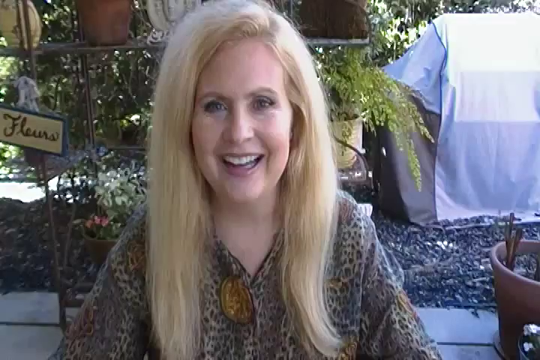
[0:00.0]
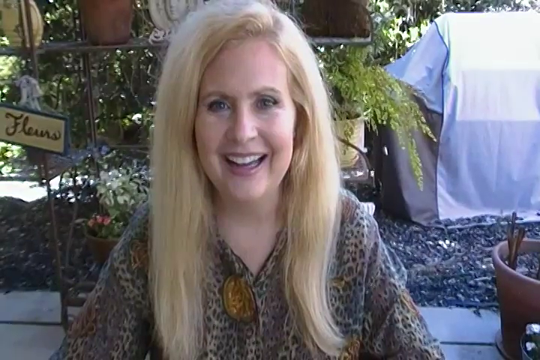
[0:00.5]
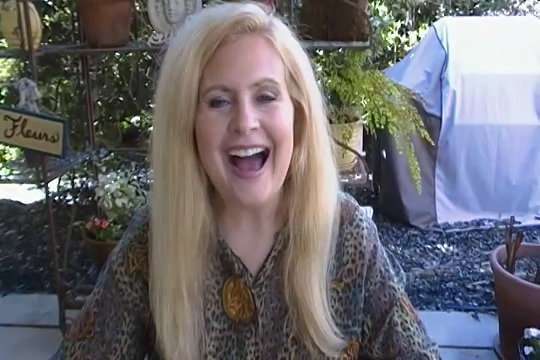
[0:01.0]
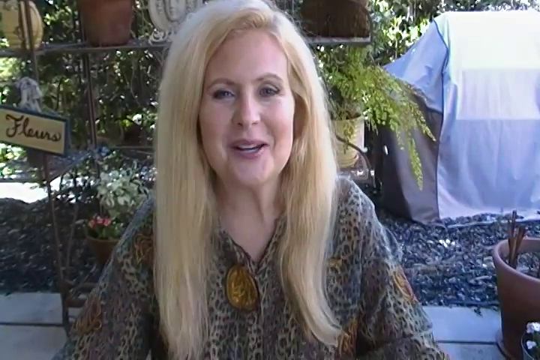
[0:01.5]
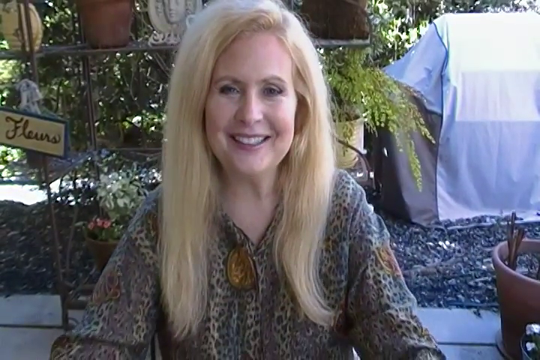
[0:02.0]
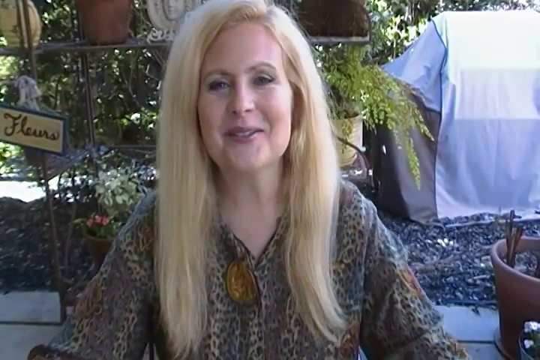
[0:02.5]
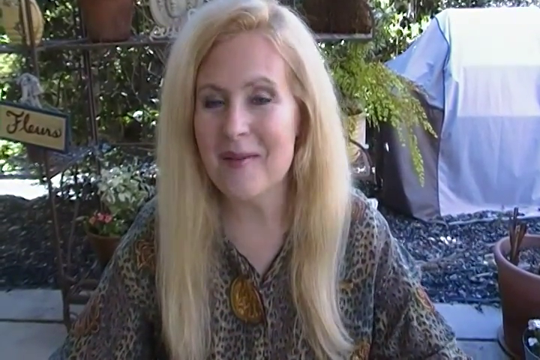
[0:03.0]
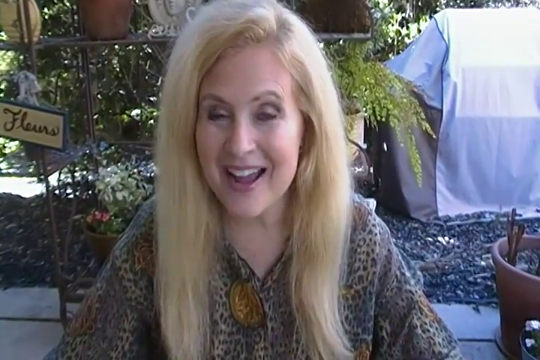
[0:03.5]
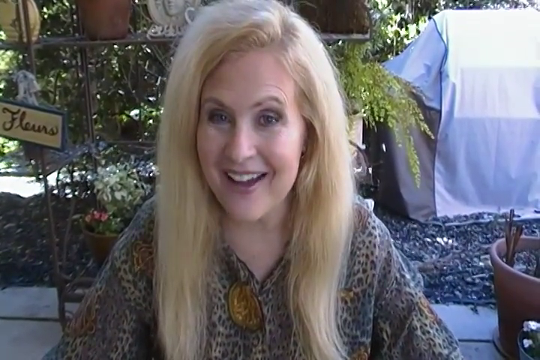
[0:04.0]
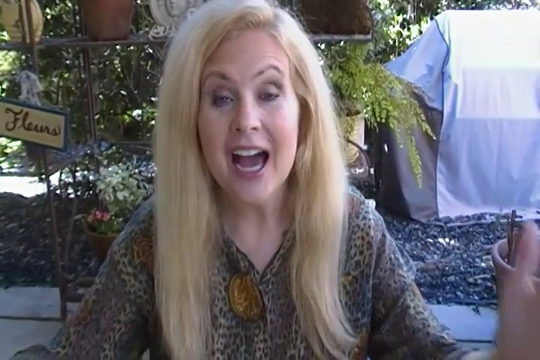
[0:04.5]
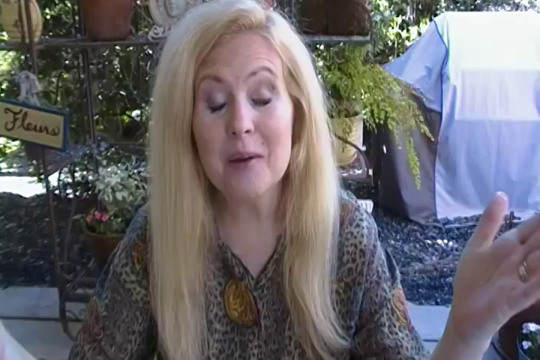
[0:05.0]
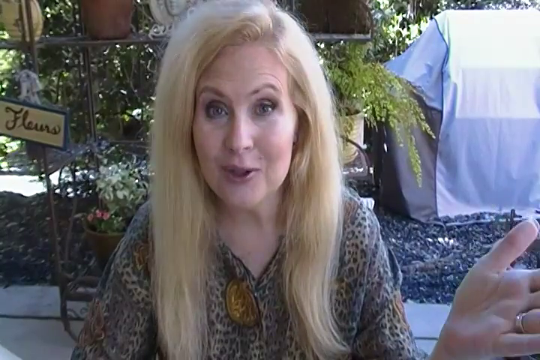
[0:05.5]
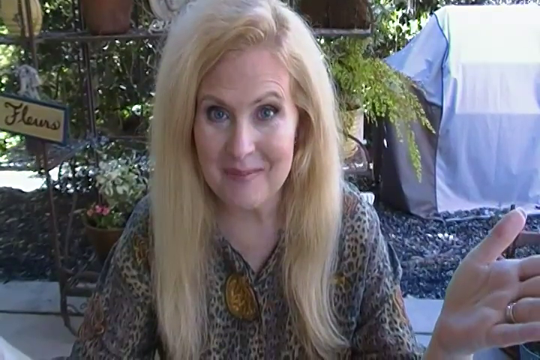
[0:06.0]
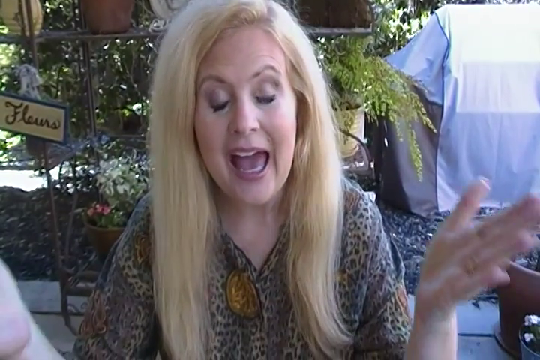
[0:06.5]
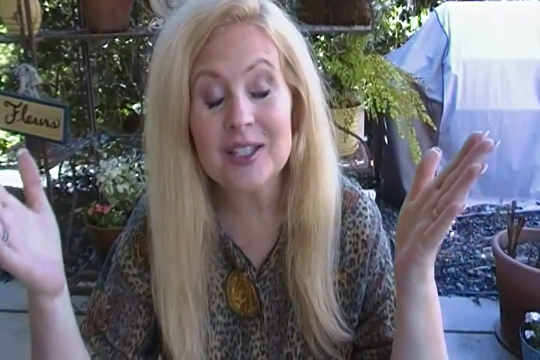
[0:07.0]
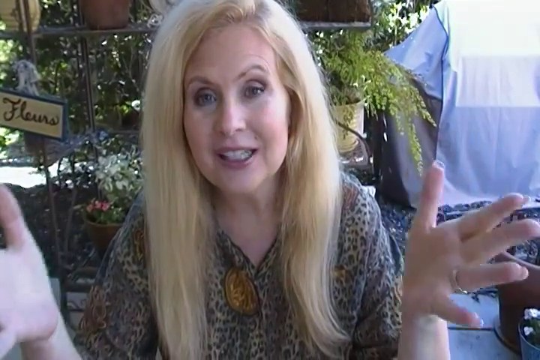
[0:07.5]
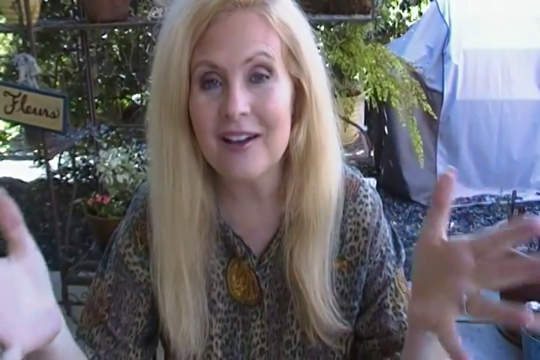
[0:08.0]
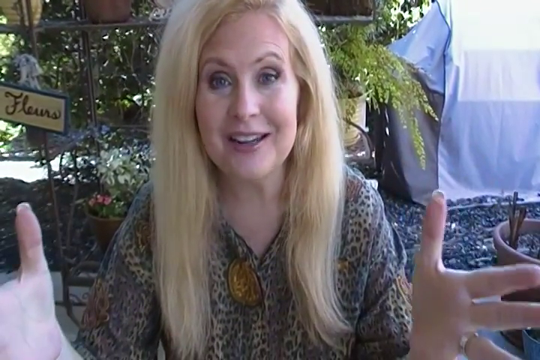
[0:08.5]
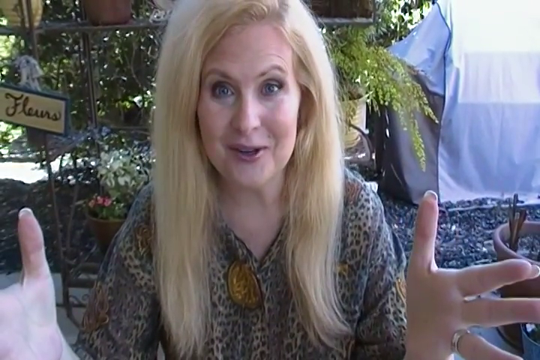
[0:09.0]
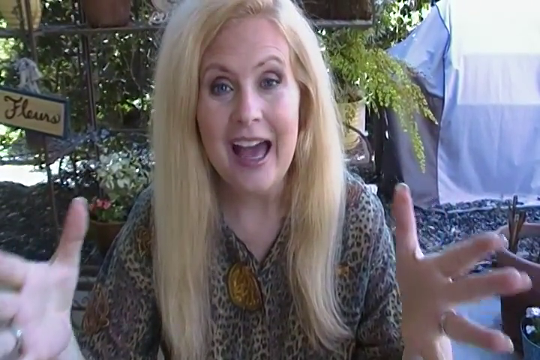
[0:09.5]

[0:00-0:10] A blonde white woman speaks directly into the camera, making hand gestures and direct eye contact. It is daytime outside and very bright, and behind her there are a number of signs. She wears a leopard shirt, and her hair seems to be very long, running down so far that its end is not visible on screen. In the background to the right, something is covered by a big brown and white sheet.